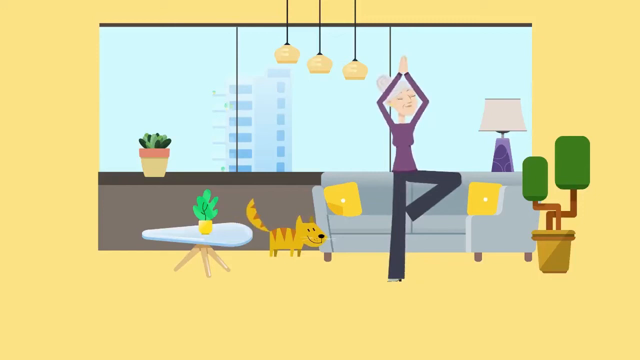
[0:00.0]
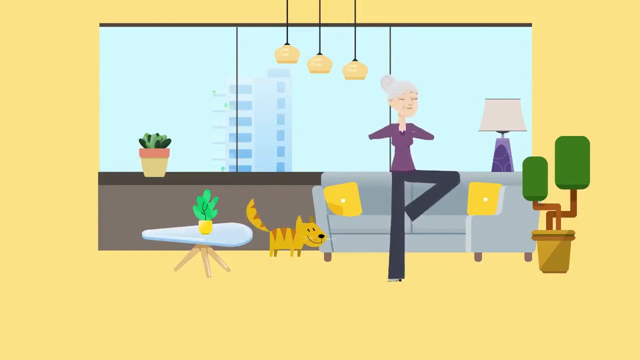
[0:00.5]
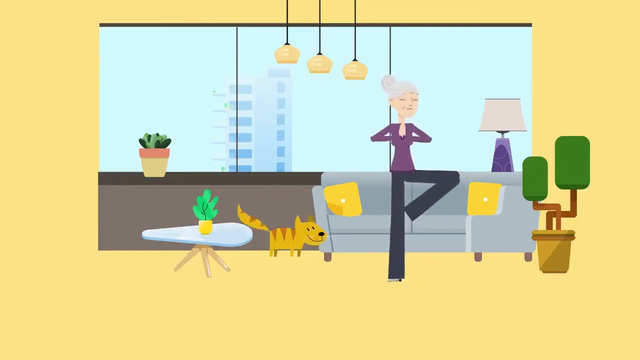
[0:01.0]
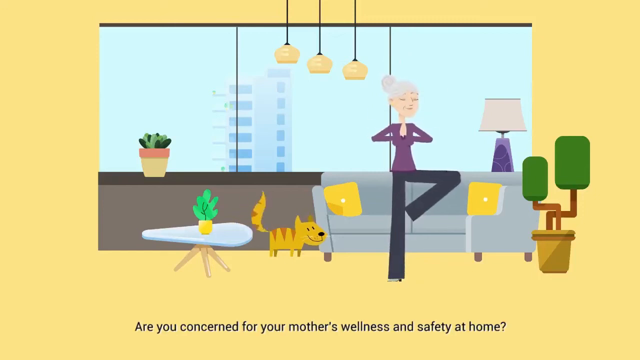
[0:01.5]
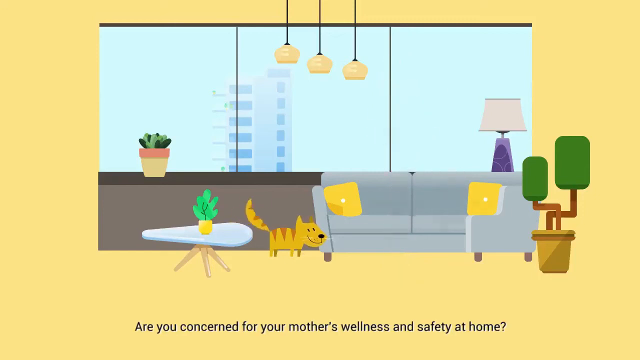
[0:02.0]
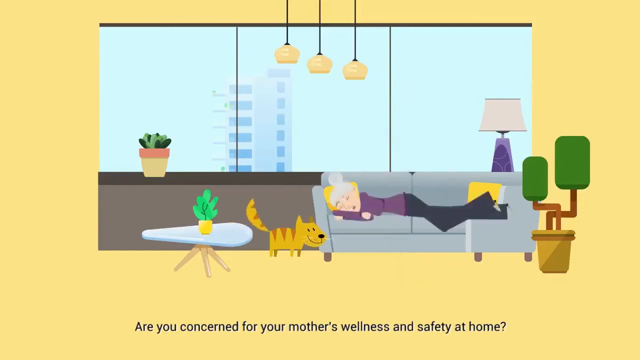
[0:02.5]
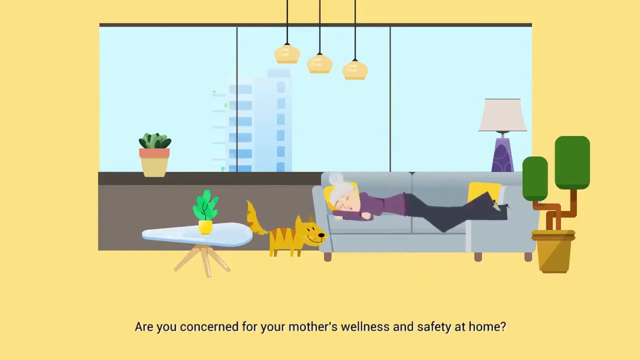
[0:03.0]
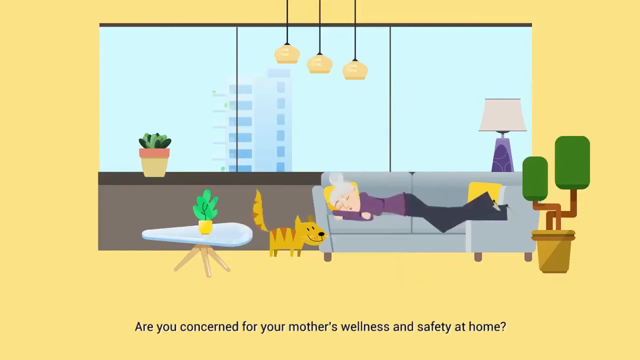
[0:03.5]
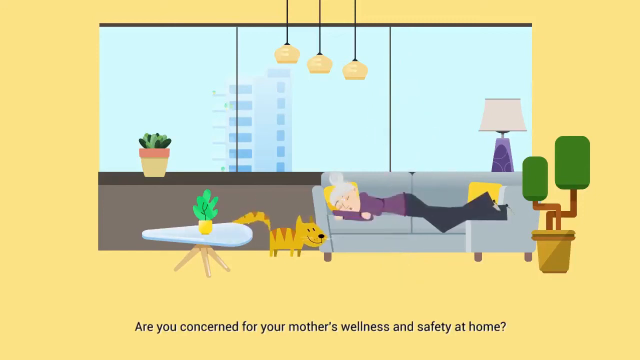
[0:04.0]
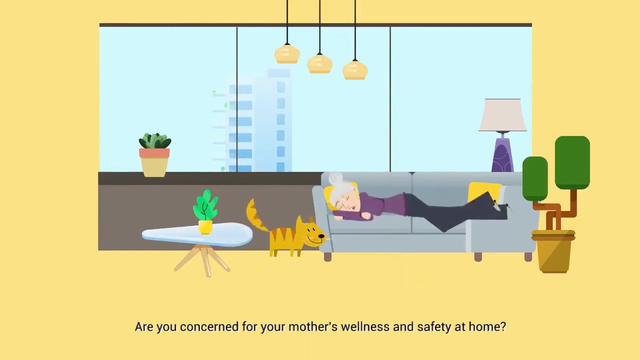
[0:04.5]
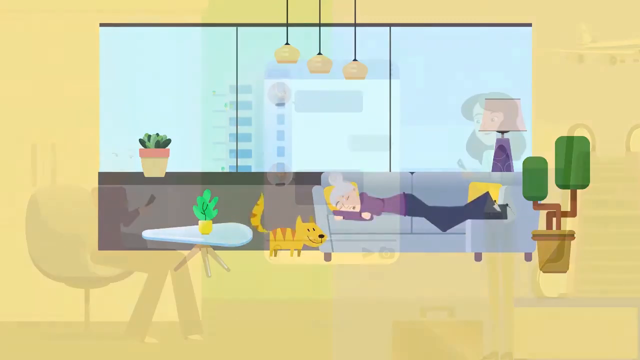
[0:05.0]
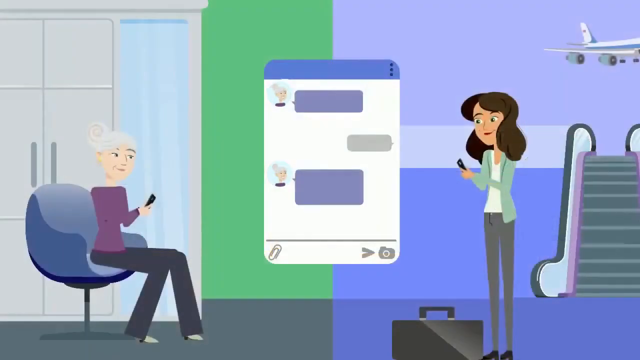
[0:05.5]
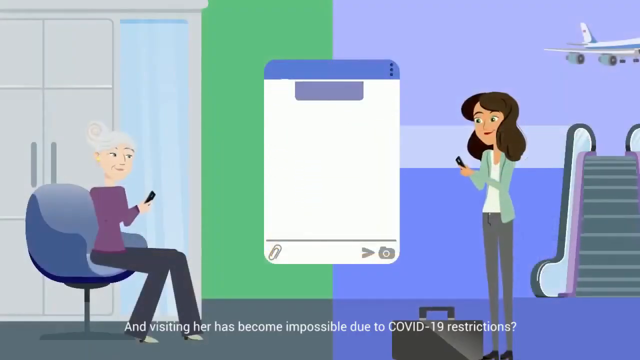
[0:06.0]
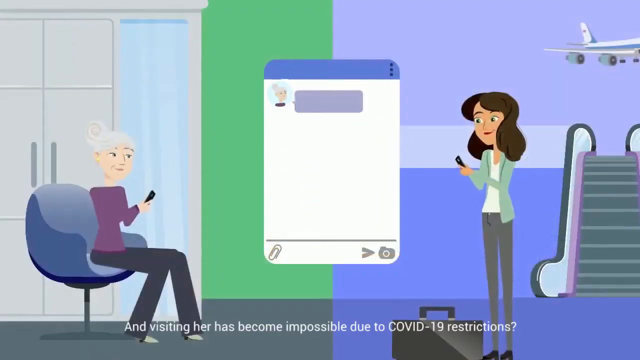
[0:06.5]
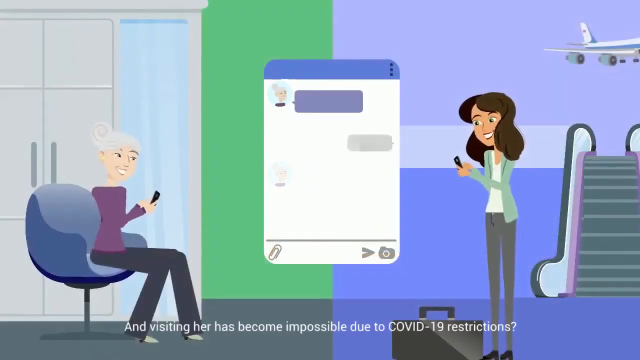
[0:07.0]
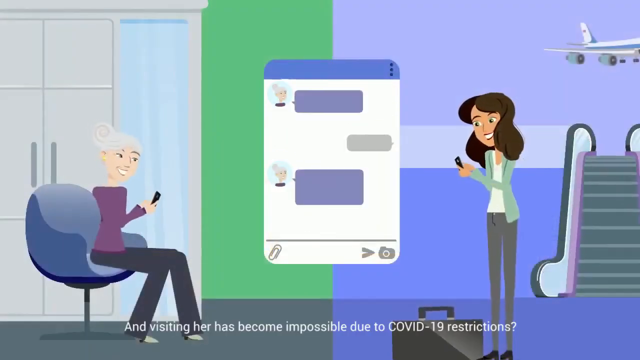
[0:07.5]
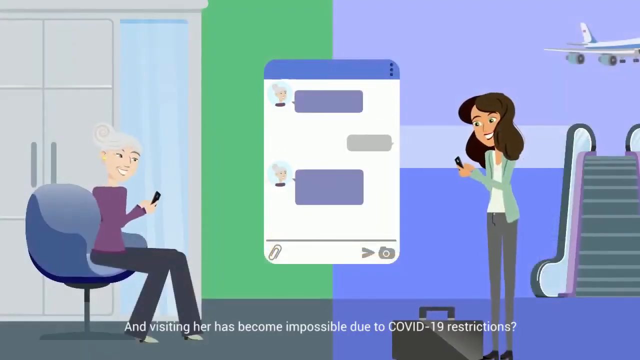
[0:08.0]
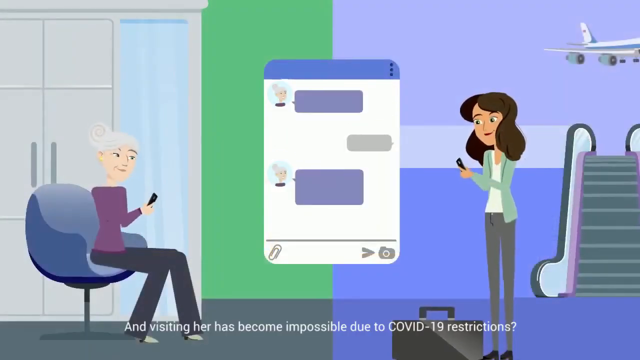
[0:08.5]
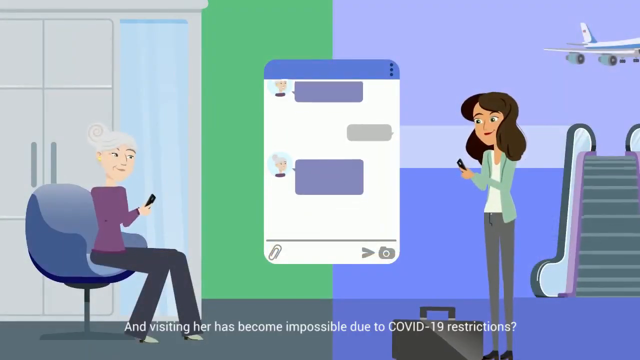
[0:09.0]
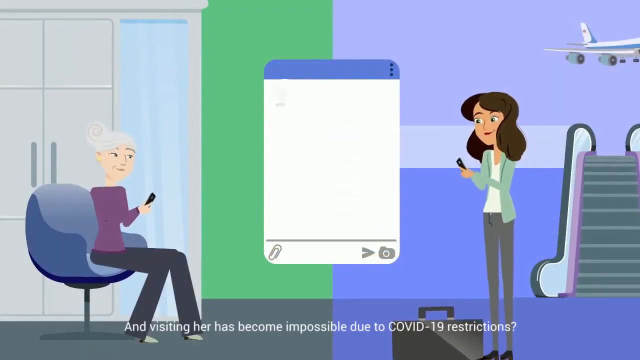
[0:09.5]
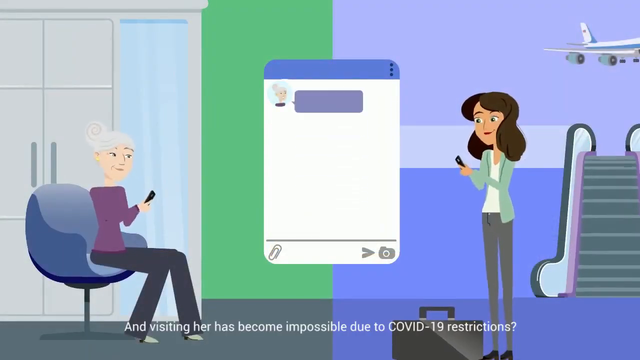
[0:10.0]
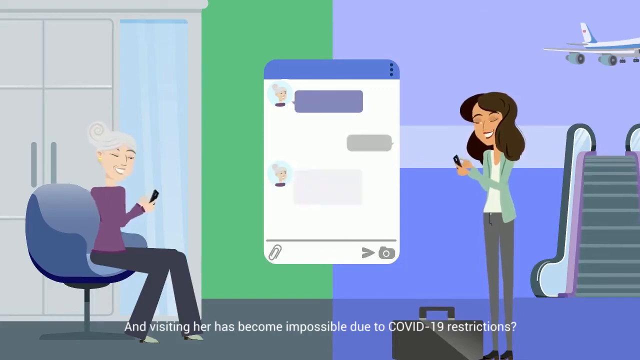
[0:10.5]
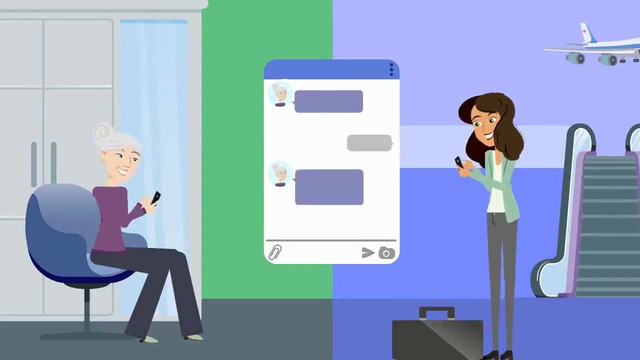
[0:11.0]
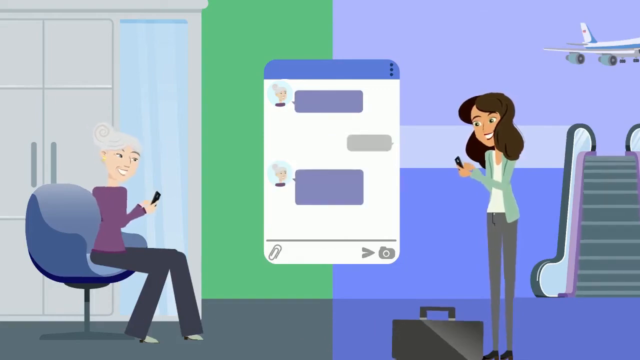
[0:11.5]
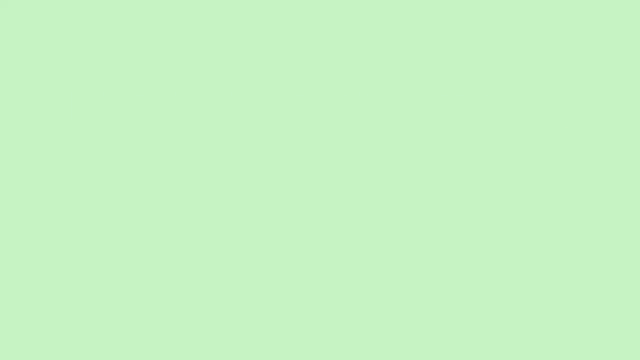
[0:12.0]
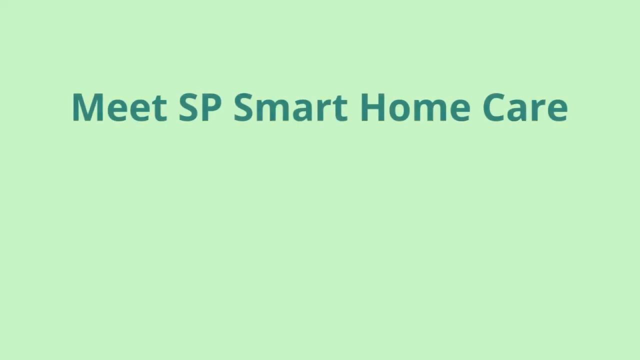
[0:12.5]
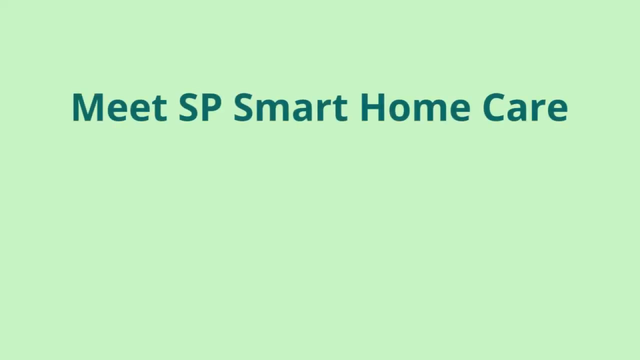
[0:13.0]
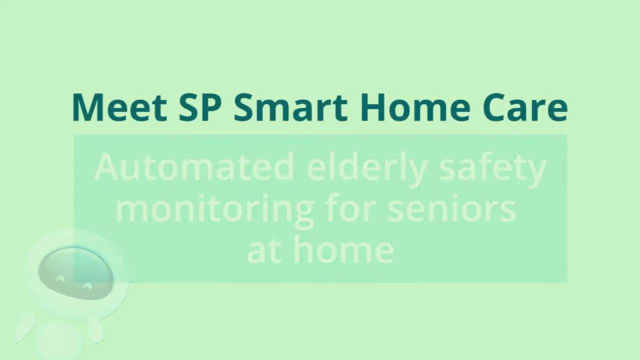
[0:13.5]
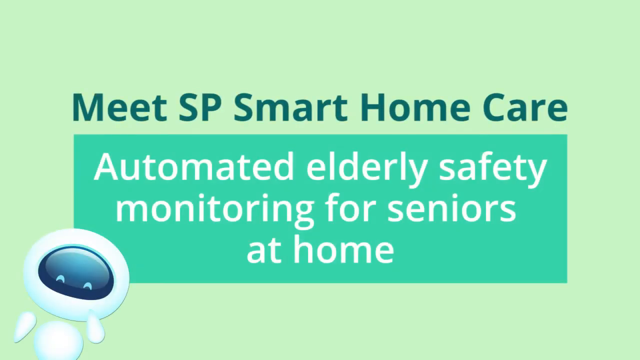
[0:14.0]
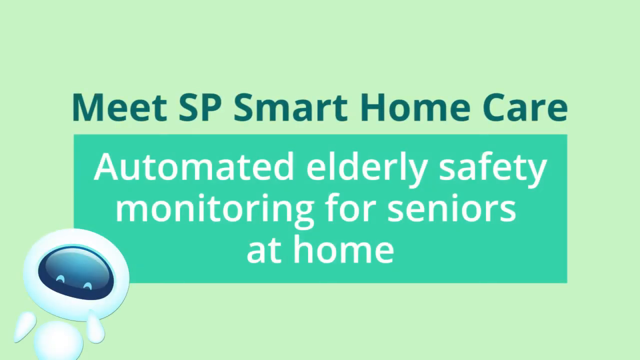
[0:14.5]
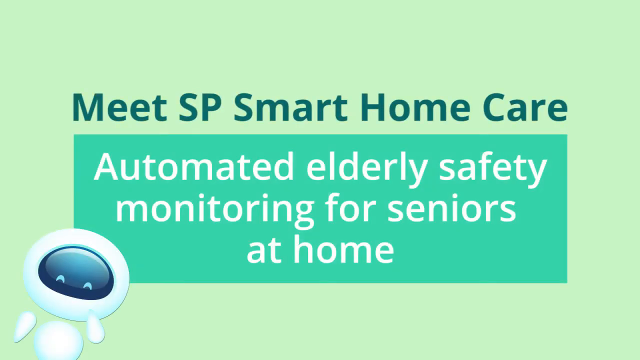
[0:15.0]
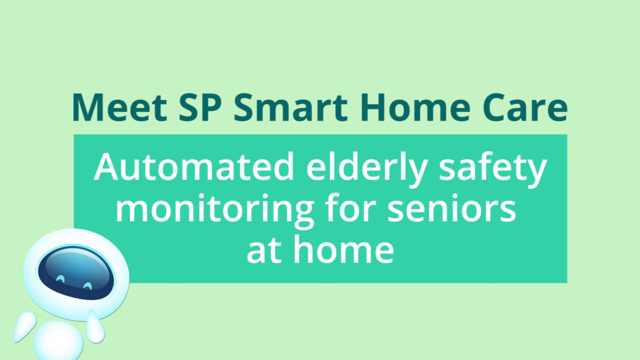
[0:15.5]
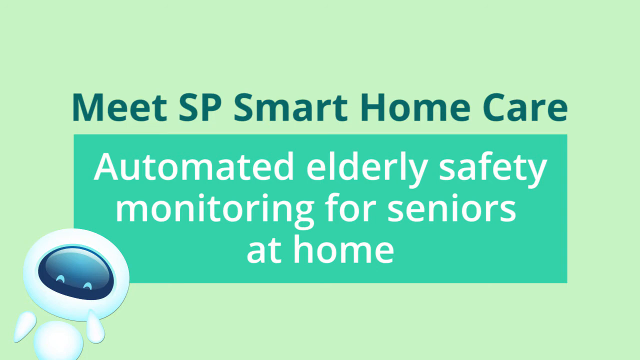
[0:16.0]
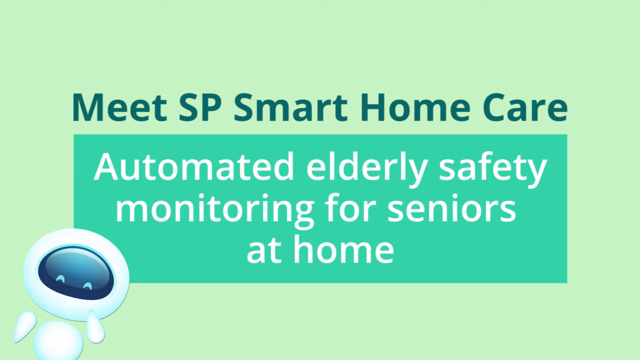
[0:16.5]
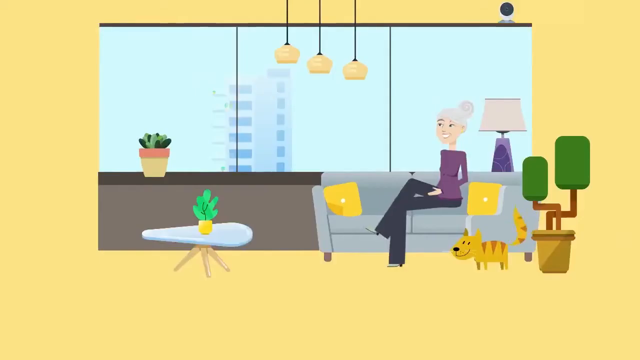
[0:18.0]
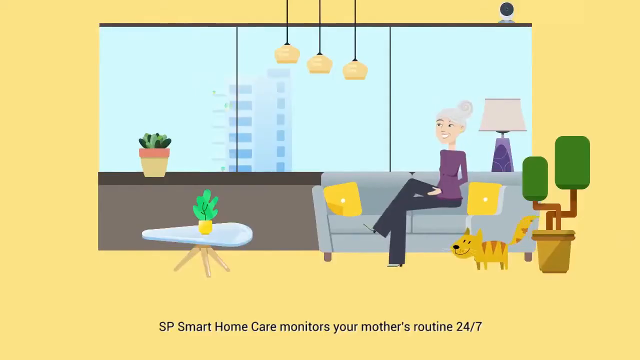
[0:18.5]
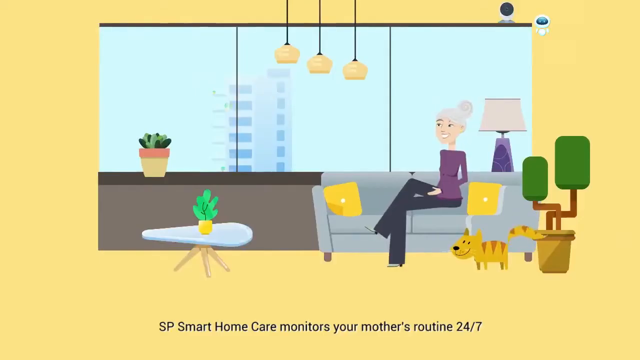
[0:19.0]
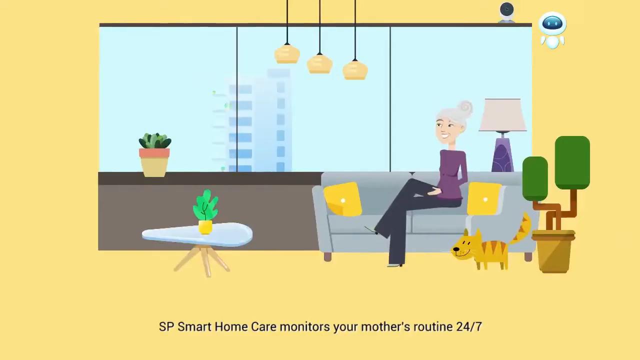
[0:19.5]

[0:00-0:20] A cartoon image shows an older woman in her home, seemingly doing yoga, standing with her hands above her head and one foot on her knee. A small animal beside her wags its tail, and text at the bottom reads "are you concerned for your mother's wellness and safety at home?" The woman is then seen lying on the couch, moving her mouth as if sleeping. The scene cuts to the older woman sitting down and a younger woman on the other side of the screen; both women are on their phones, seemingly texting each other, with a conversation log in the middle and text at the bottom reading "And visiting her has become impossible due to COVID-19 restrictions?" It changes to a green background with the text "Meet SP smart home care" and, in a box below that, "automated elderly safety monitoring for seniors at home," with a small robot in the corner. It cuts back to the woman in the house with the small animal, sitting on a couch smiling, with the text "SP smart home care monitors your mother's routine 24-7."